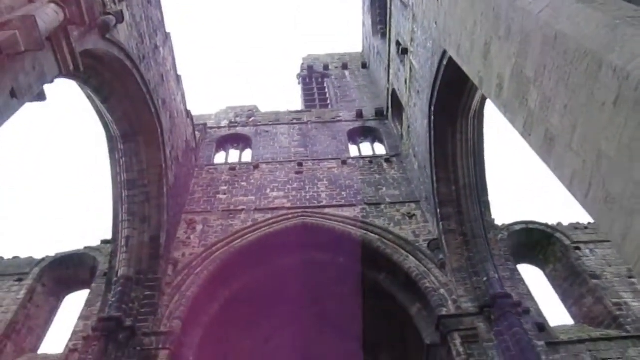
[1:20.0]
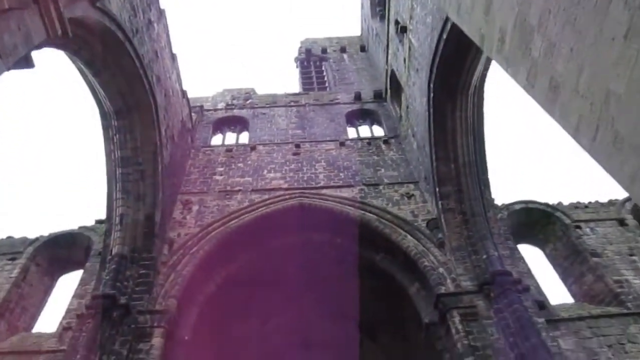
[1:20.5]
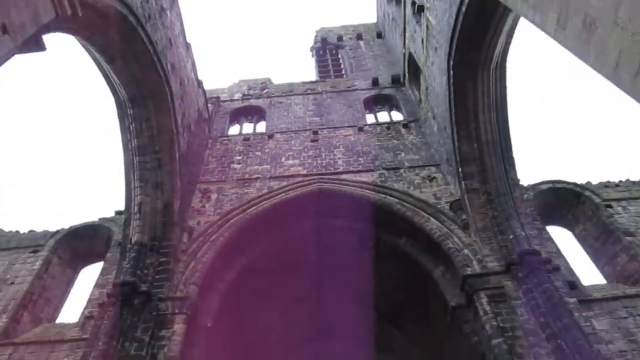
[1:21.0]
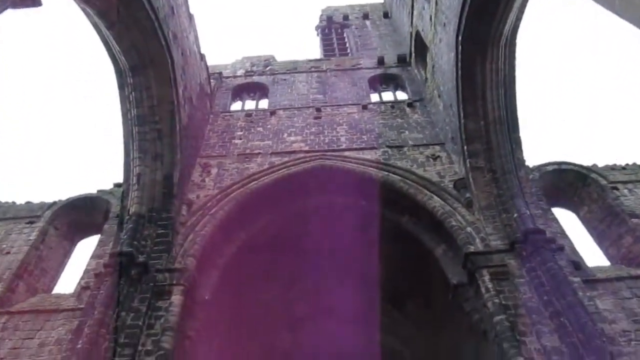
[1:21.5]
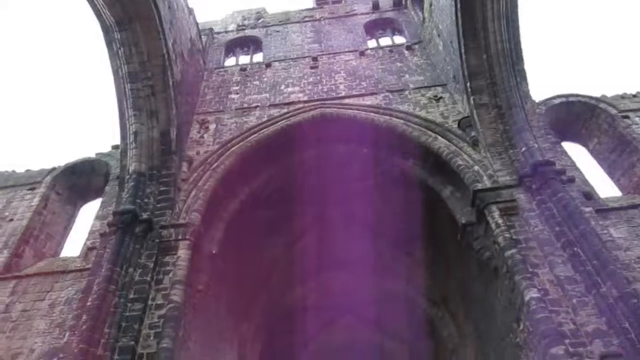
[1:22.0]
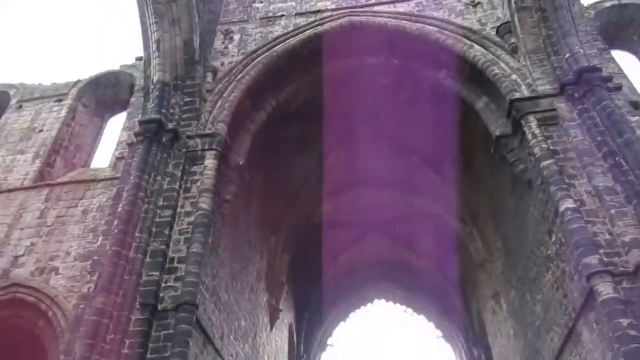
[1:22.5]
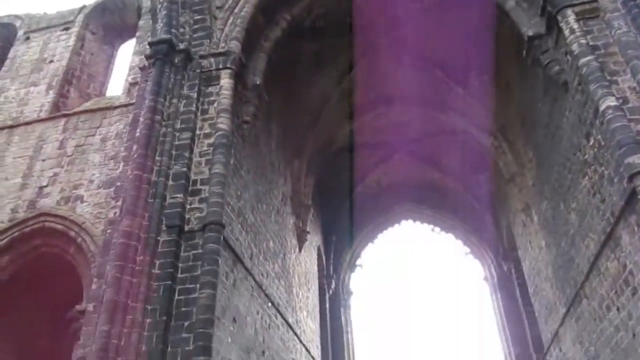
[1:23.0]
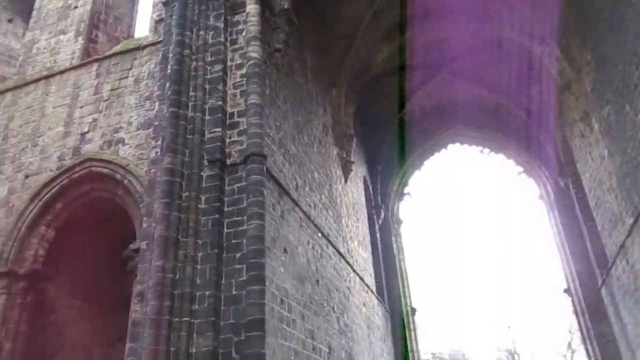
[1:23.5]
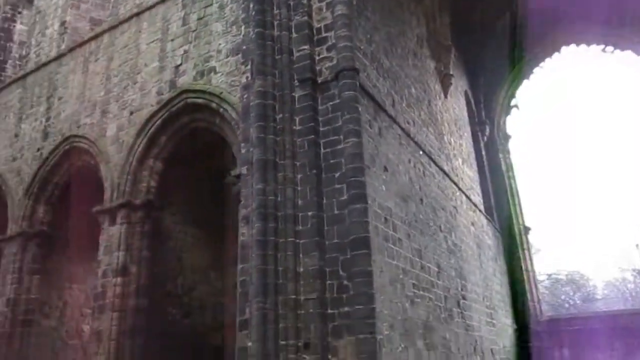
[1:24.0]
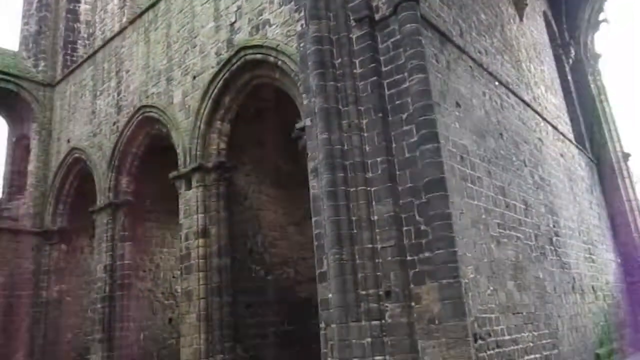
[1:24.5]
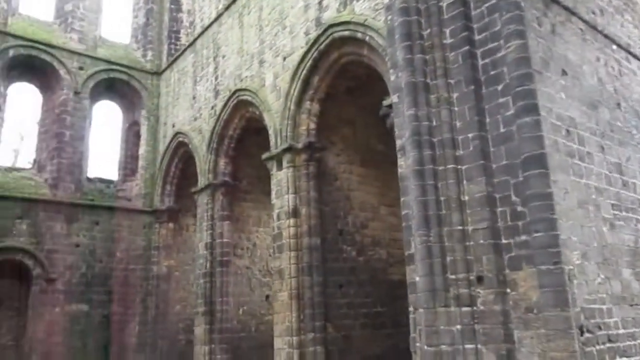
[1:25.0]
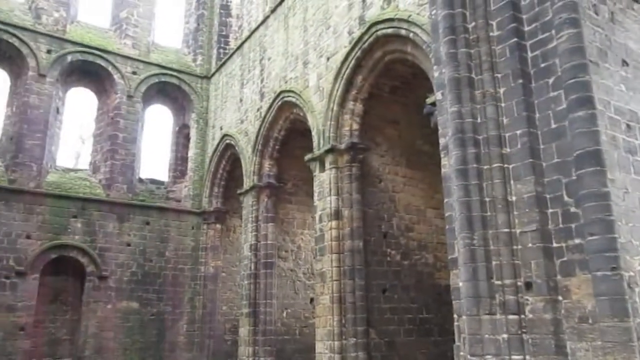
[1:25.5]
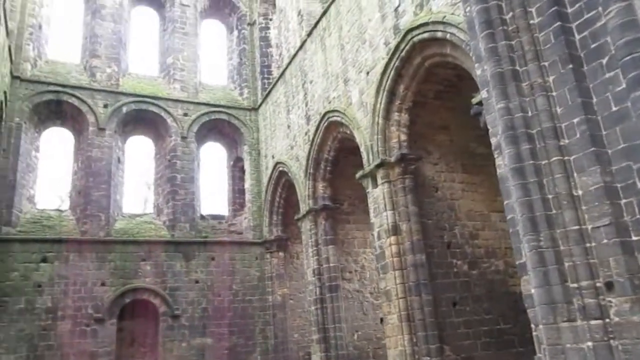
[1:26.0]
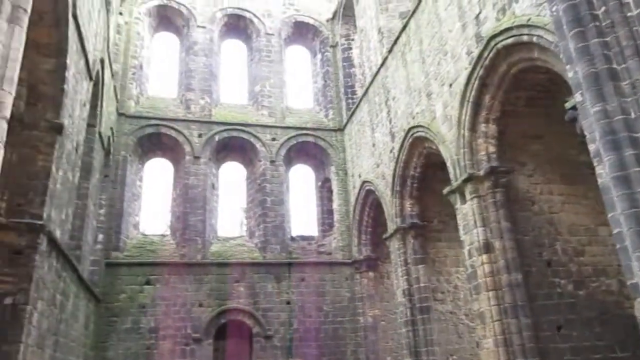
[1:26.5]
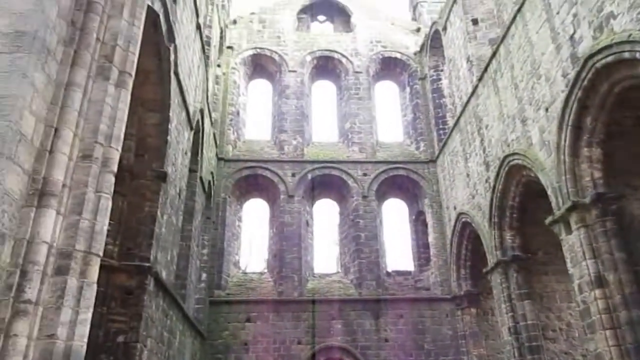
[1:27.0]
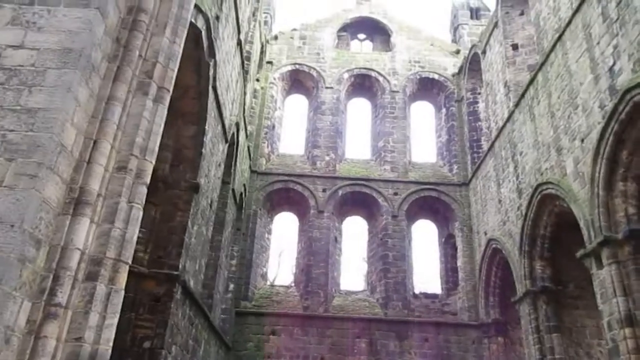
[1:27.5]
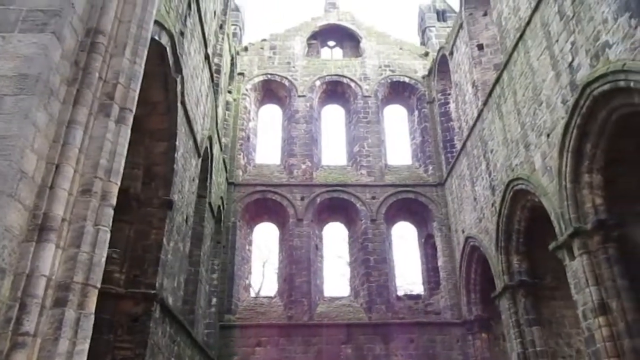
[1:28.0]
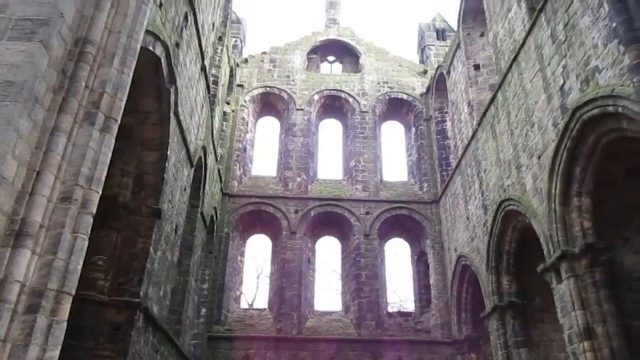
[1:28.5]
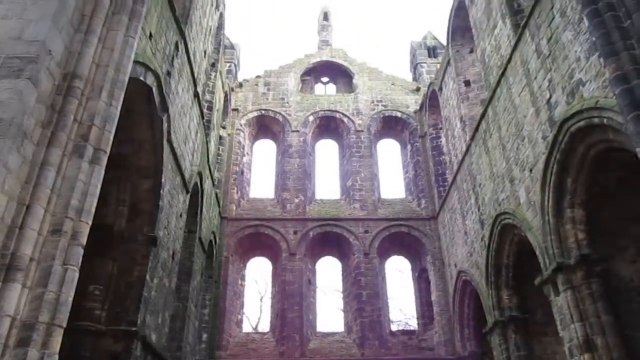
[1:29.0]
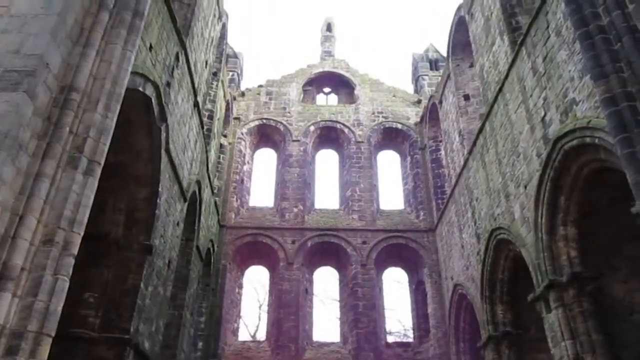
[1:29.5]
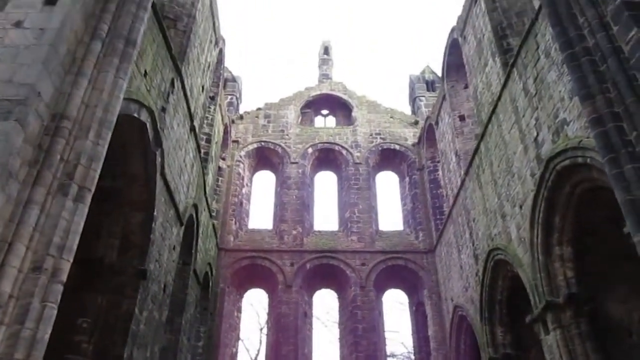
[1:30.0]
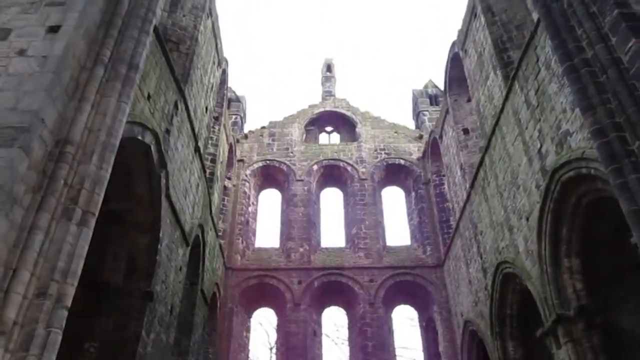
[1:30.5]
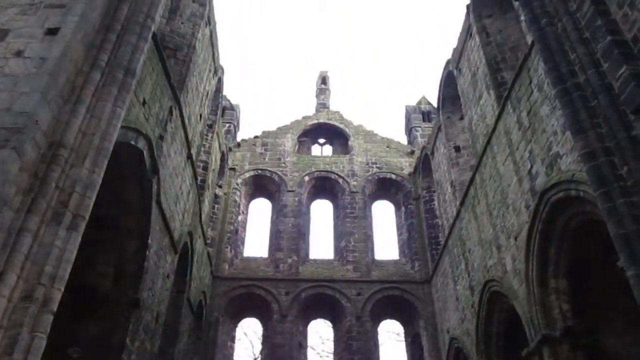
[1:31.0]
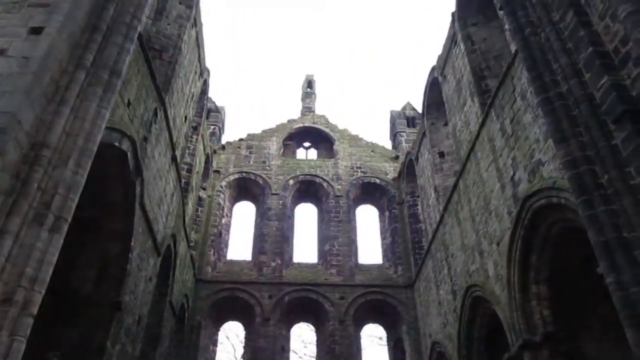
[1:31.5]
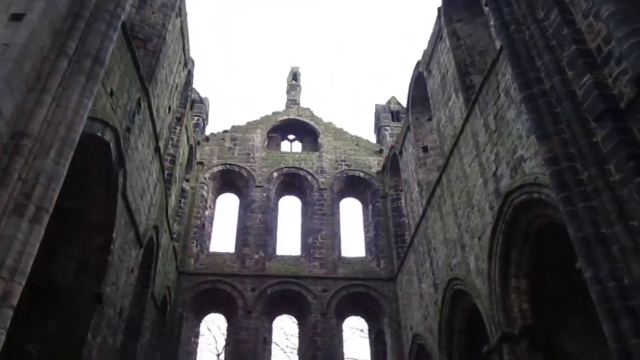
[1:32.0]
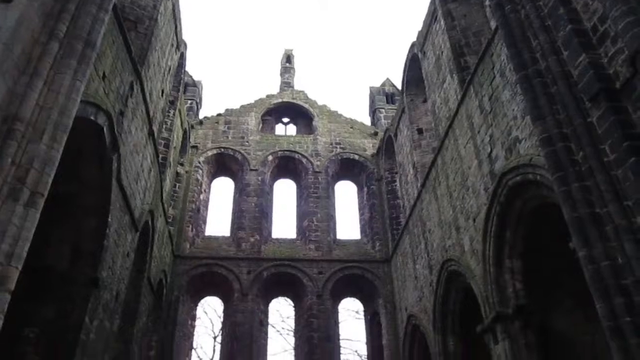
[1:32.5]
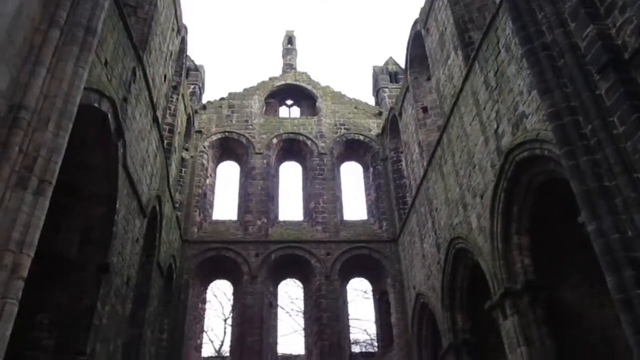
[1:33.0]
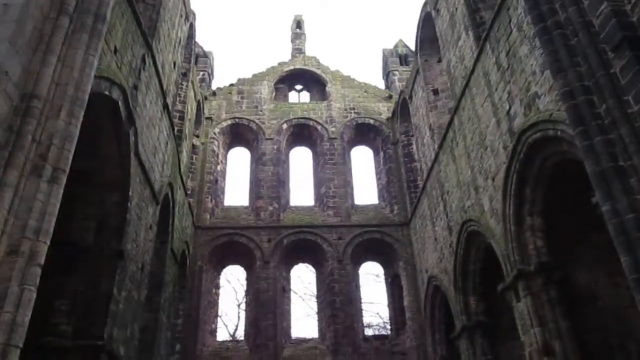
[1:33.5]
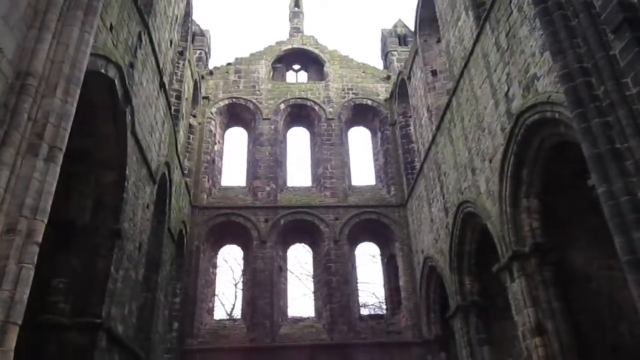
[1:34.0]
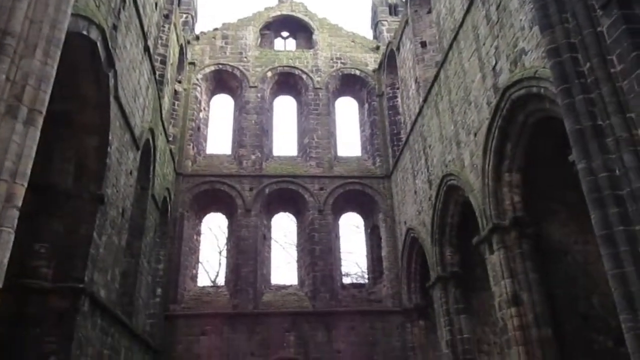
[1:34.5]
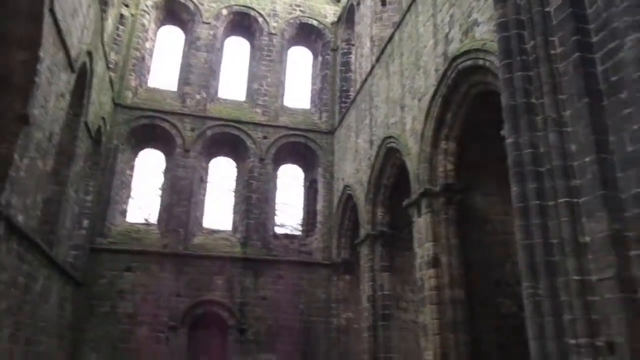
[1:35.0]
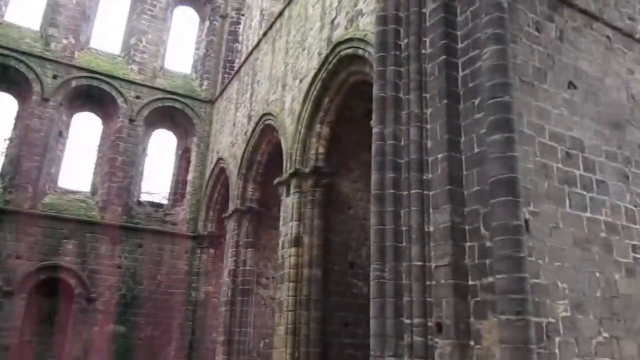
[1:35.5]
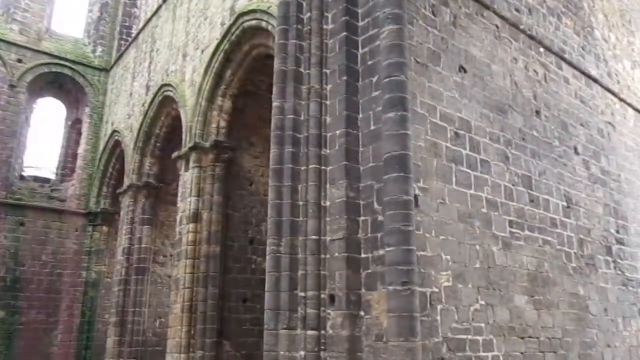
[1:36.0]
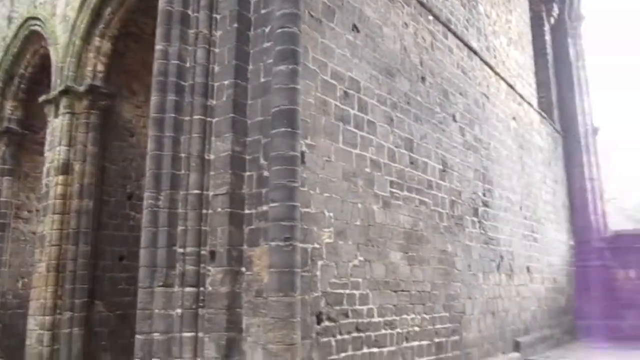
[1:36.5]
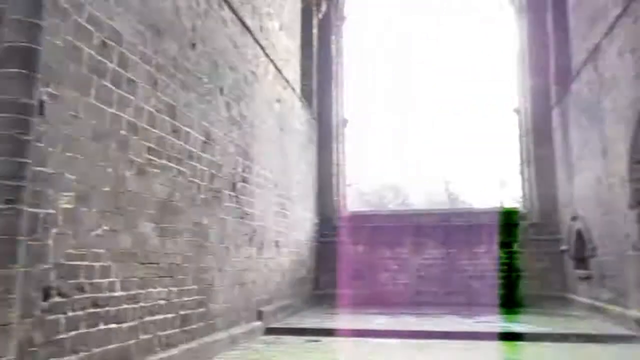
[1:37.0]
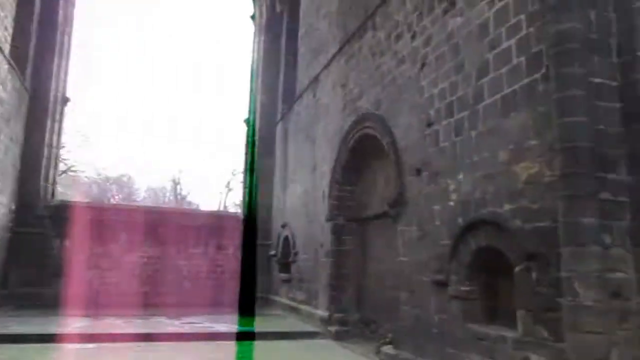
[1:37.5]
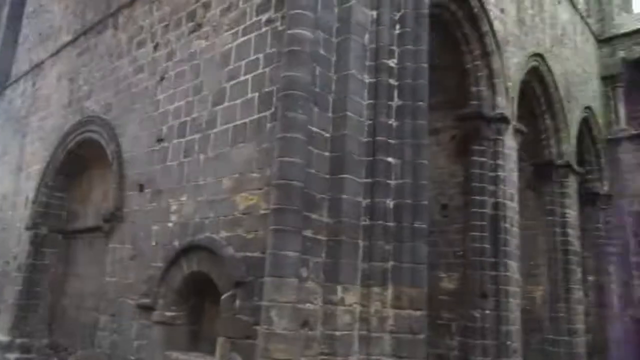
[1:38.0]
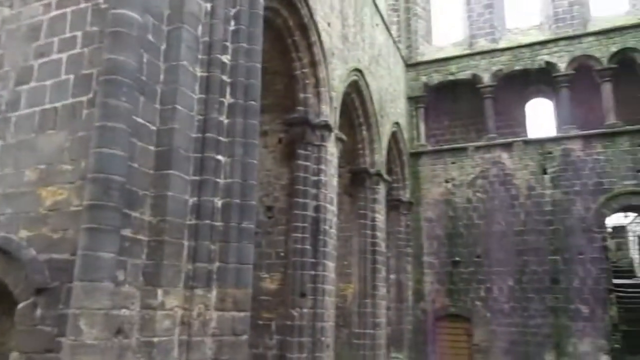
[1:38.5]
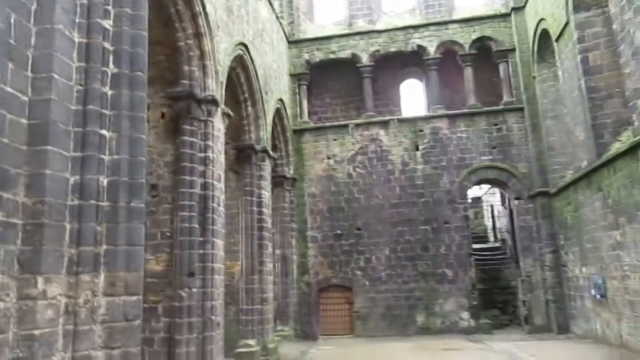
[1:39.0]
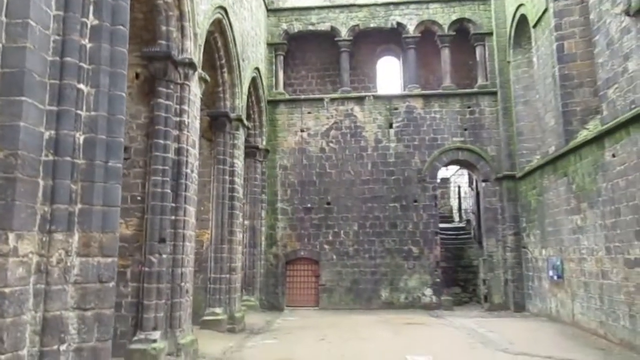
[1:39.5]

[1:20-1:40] The camera is pointed almost directly upward, then pans down and over to the left. It shows the hallway going off to the left, with six archways arranged in two rows and light streaming in through them. Above is a small double window, and above that the frame of the building rises into a triangular point with a small spire above it. On both sides there are two other towers with small windows in them. The camera lingers on this for a moment and then pans down slightly, giving a brief glimpse of a doorway within this wall. There are archways on both sides of this hallway. The camera pans to the right and then all the way around 180 degrees to show another hallway leading off to the right, just before the shot ends.